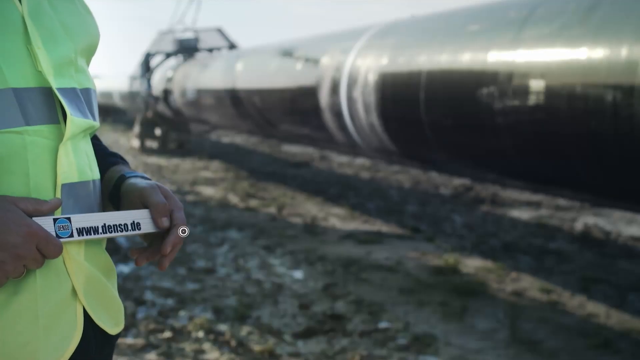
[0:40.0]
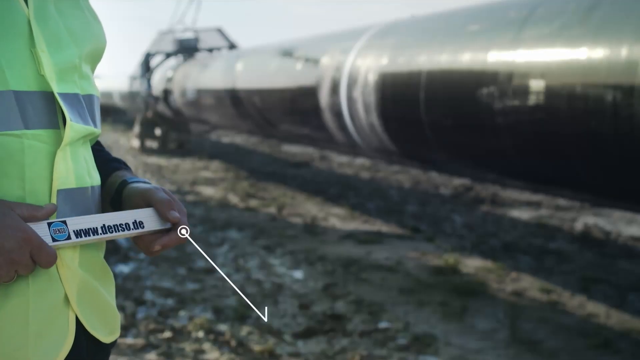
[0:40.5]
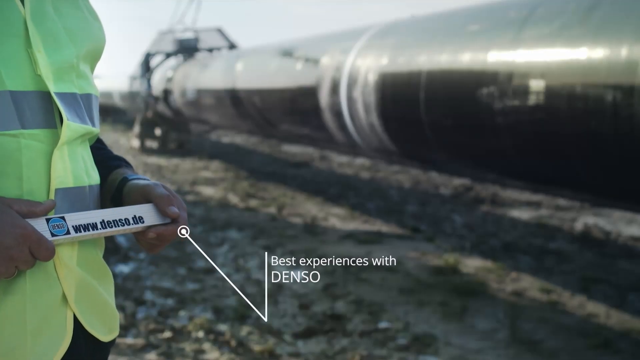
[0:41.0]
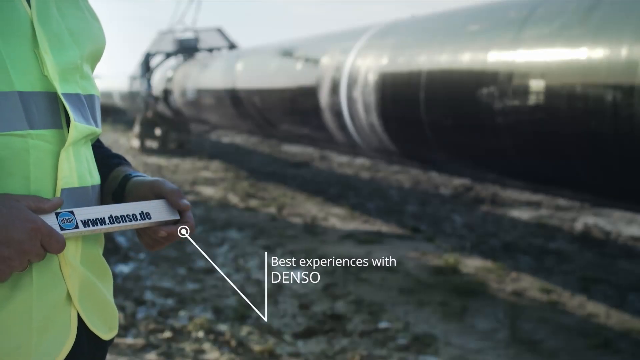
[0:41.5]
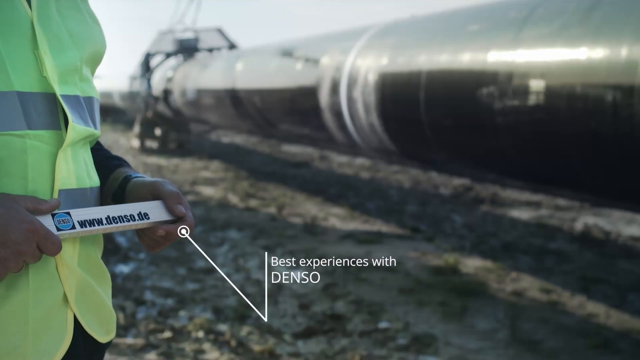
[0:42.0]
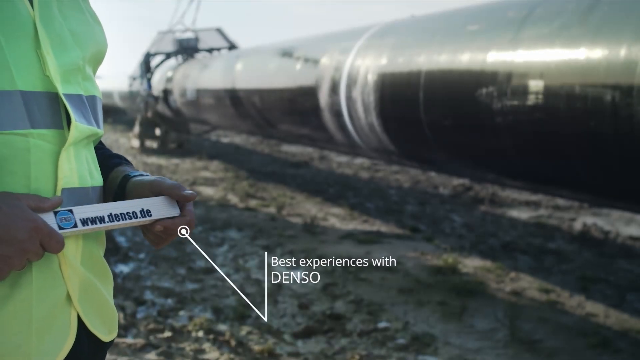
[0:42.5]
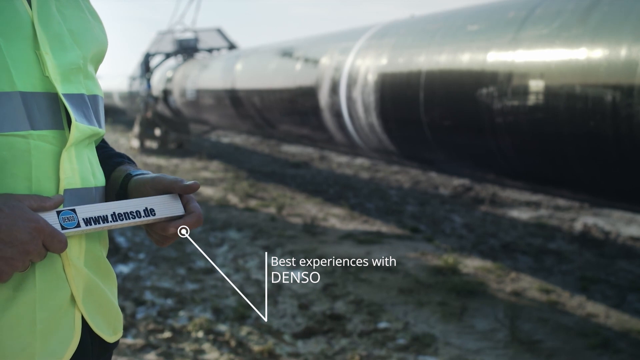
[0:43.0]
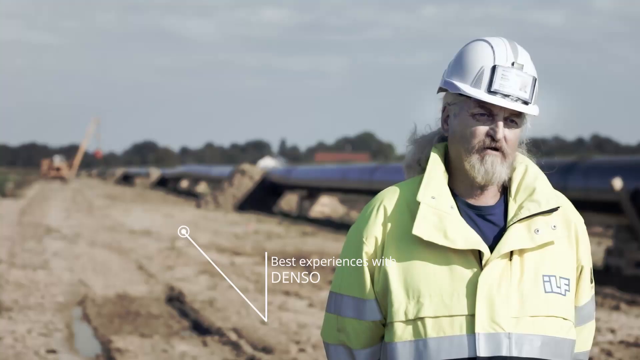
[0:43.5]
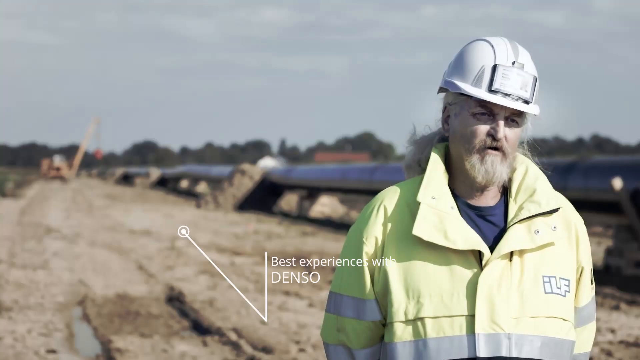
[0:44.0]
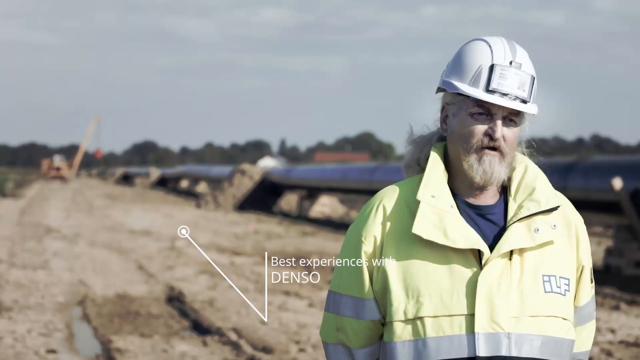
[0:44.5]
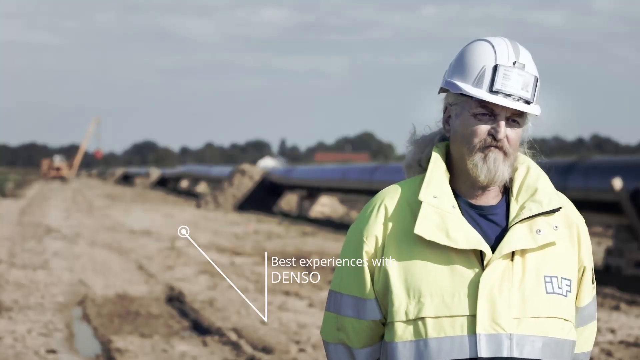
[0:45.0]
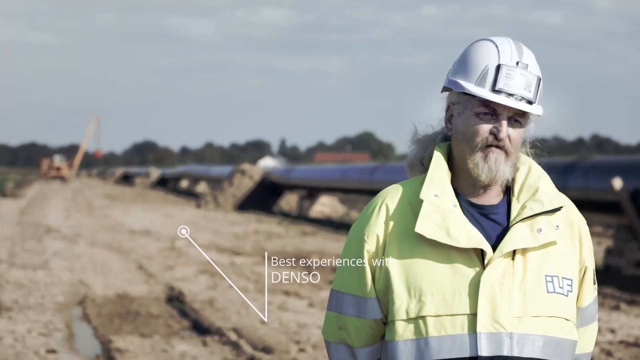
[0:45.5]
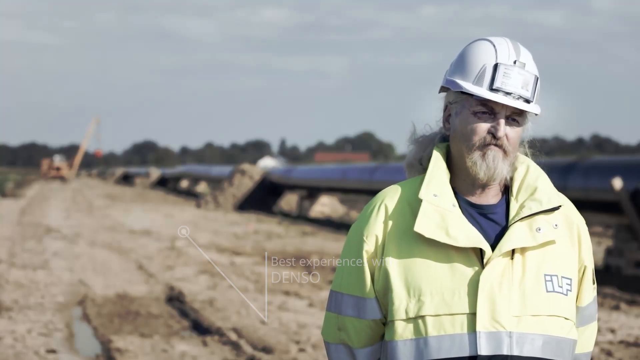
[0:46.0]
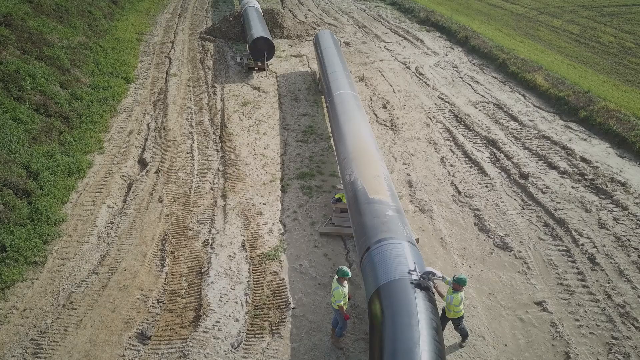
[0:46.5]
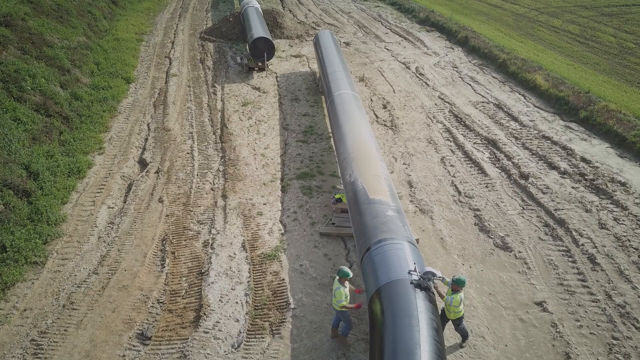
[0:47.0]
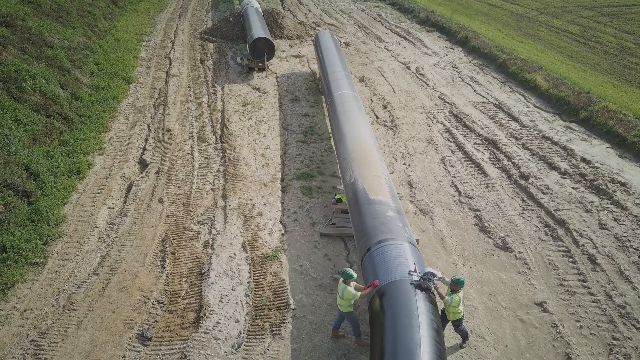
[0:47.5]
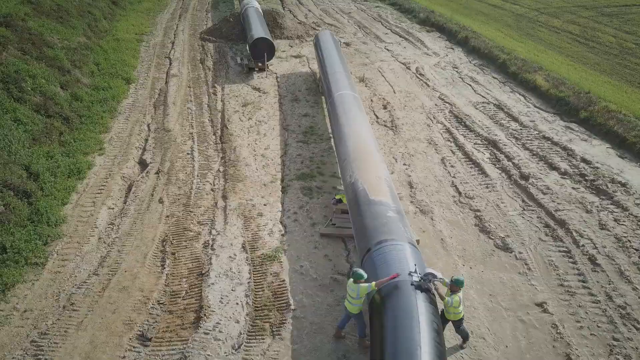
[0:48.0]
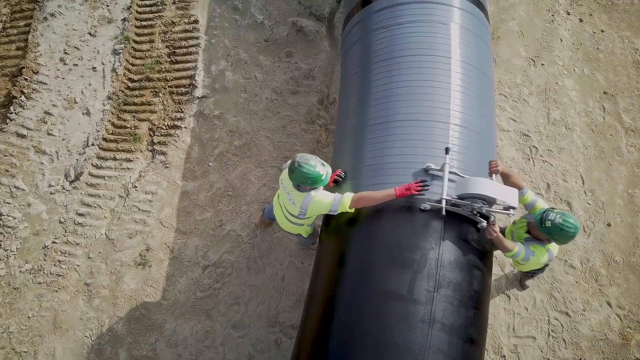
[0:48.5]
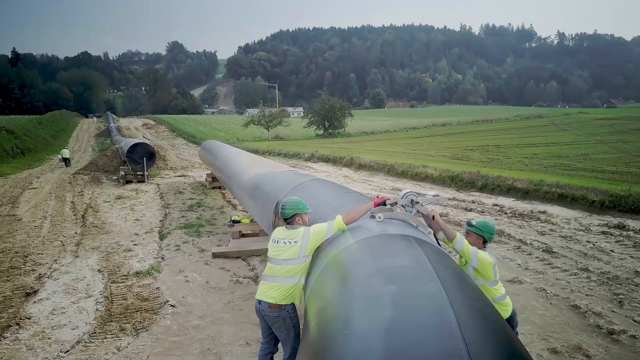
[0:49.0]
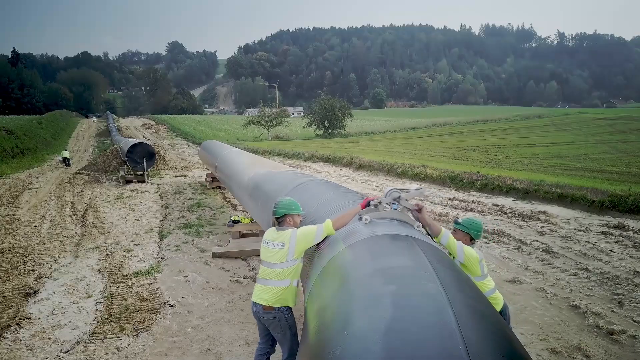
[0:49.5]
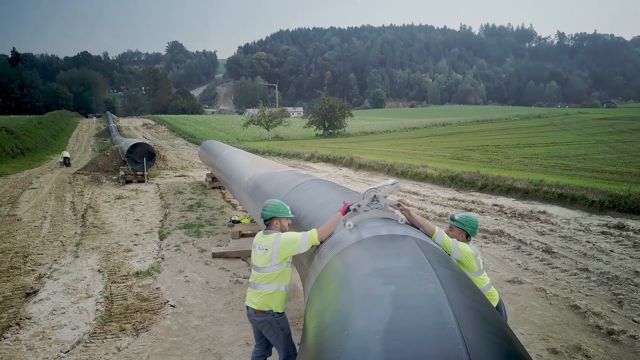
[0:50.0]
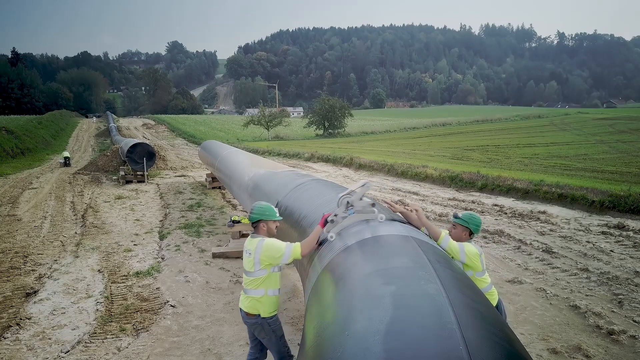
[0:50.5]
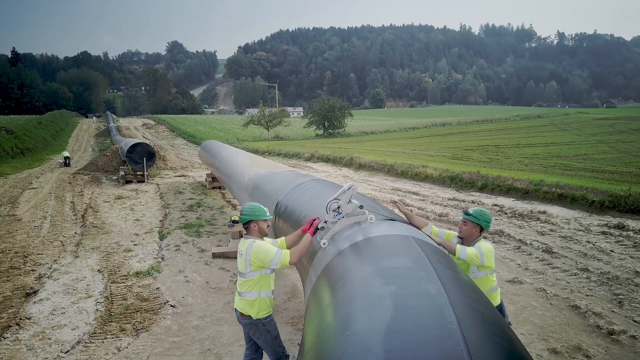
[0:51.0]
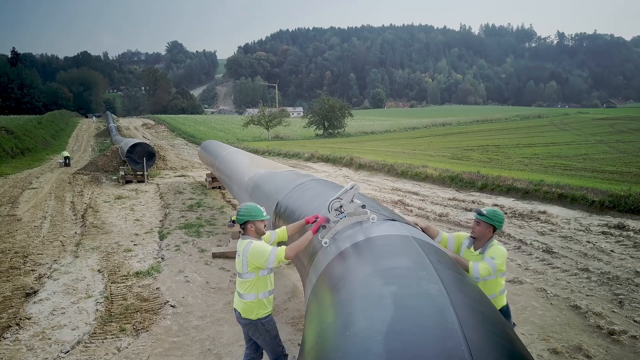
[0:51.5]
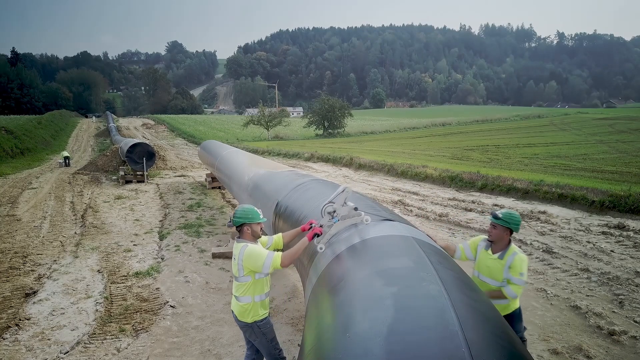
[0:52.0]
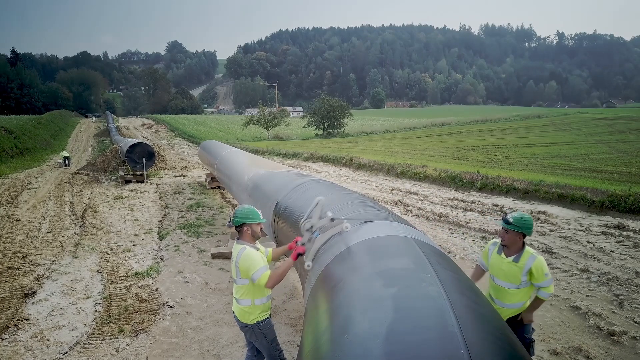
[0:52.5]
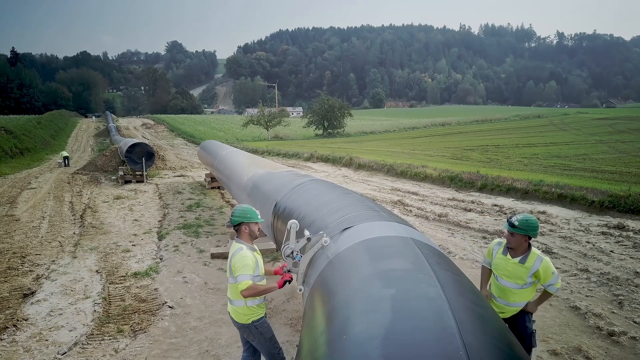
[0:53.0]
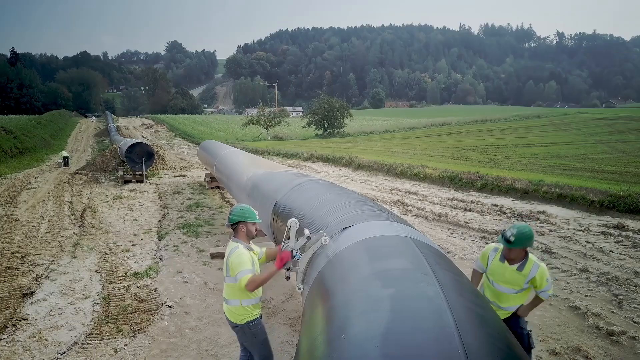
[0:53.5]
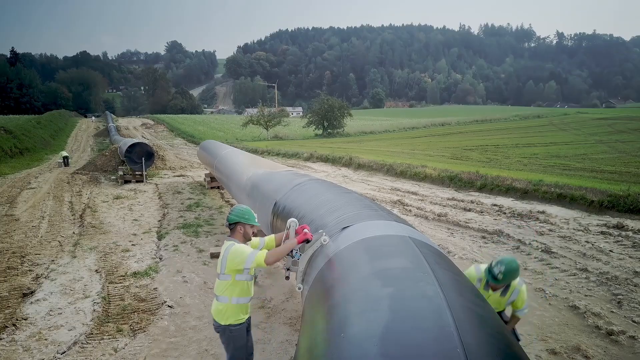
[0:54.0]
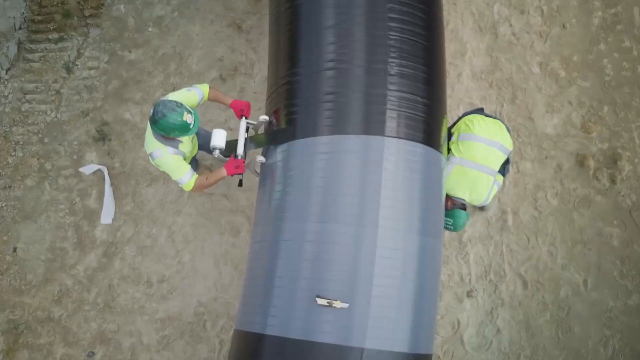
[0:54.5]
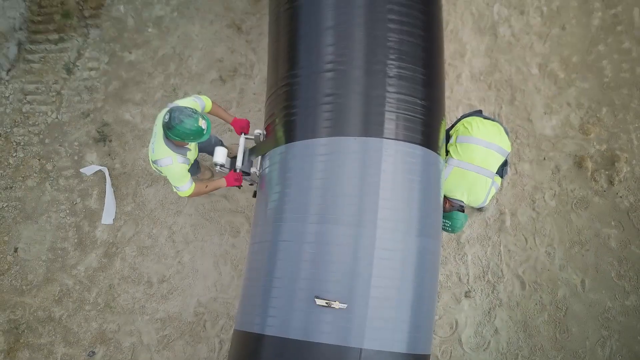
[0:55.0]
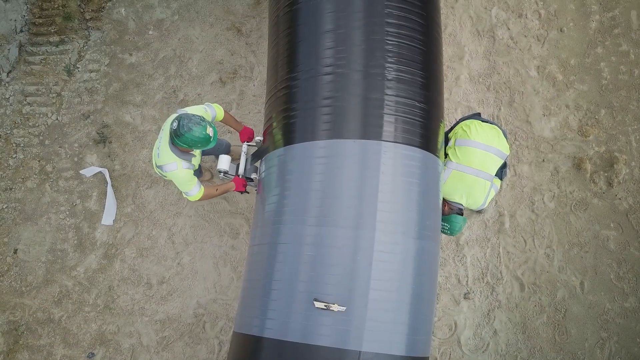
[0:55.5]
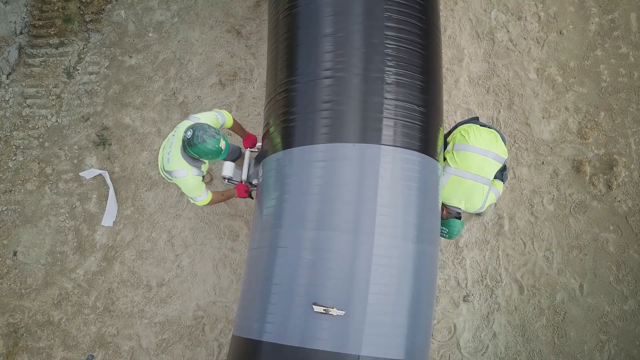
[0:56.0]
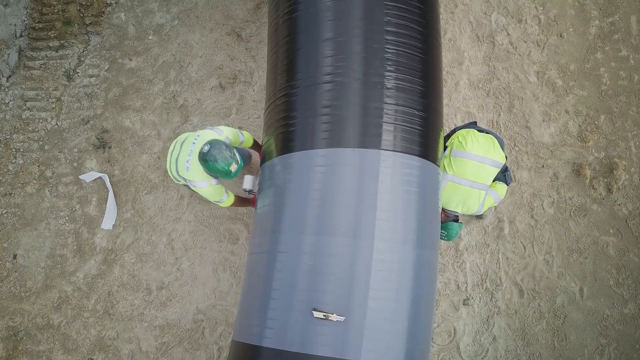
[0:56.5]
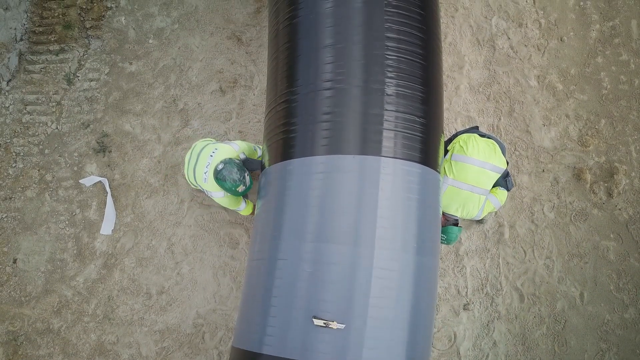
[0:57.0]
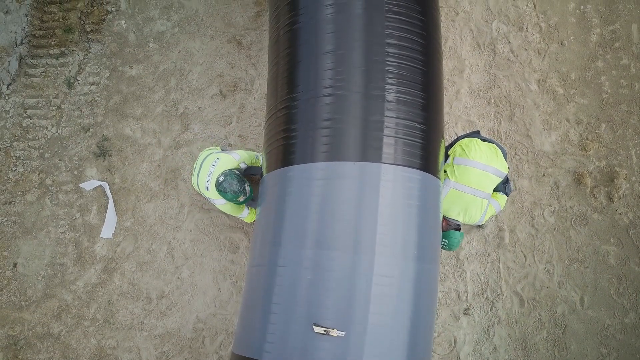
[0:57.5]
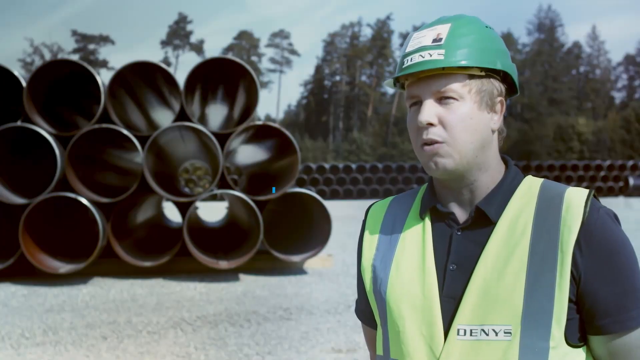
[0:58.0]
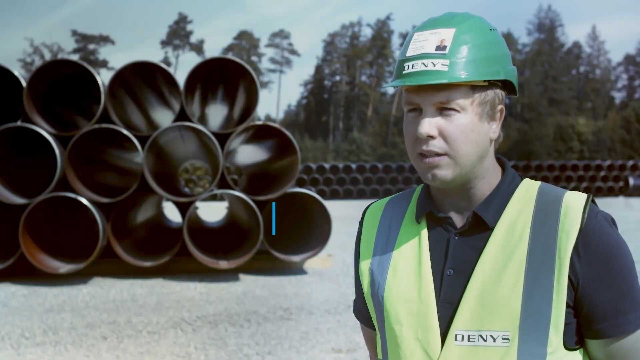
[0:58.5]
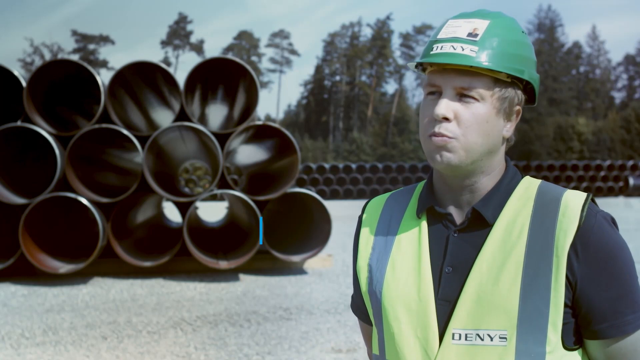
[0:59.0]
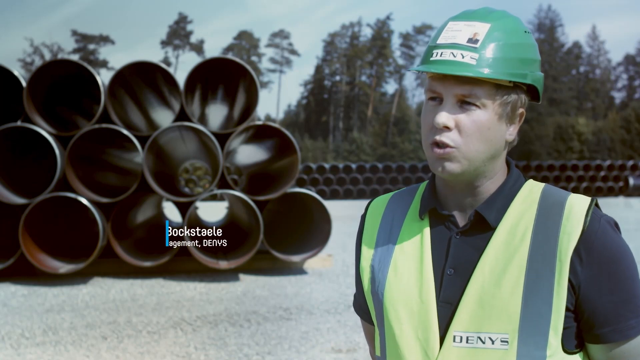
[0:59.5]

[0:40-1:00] A worker wearing a watch holds a stick that shows his company's name, Demsco, along with a website, "www.demsco," ending in "DE." Two men work on an extremely large pipe, one on each side of it. The worker on the right hands a machine, which looks like it is on rollers, to the worker on the left, and they wrap the pipe in a black case or coat that protects it. White lines are shown again marking where the pipes will be laid. The men wrapping the pipe are in a country setting with nothing but trees around them.